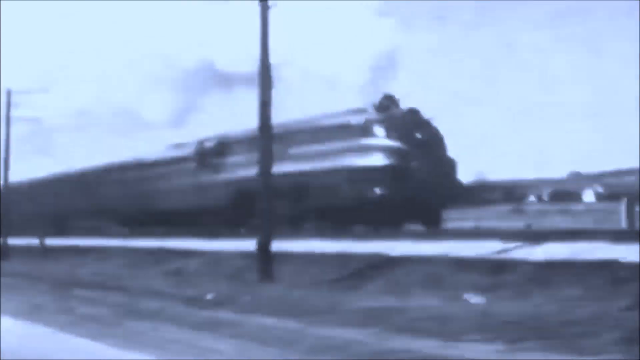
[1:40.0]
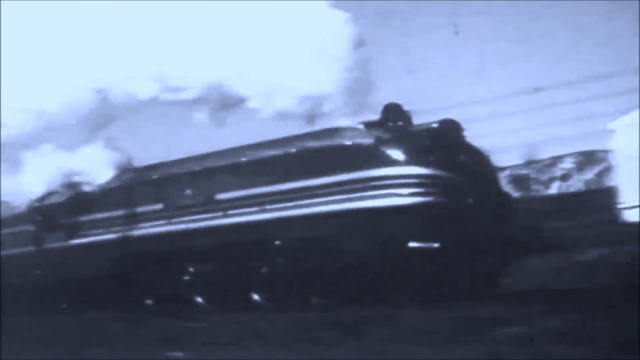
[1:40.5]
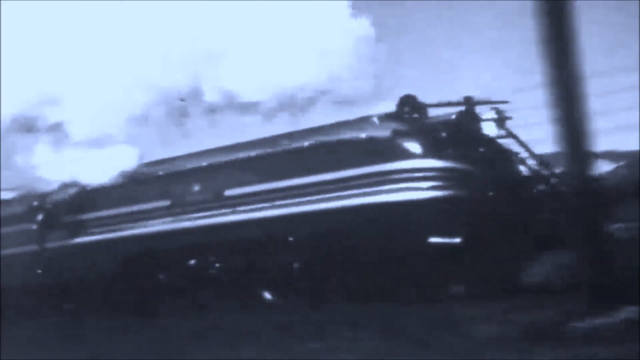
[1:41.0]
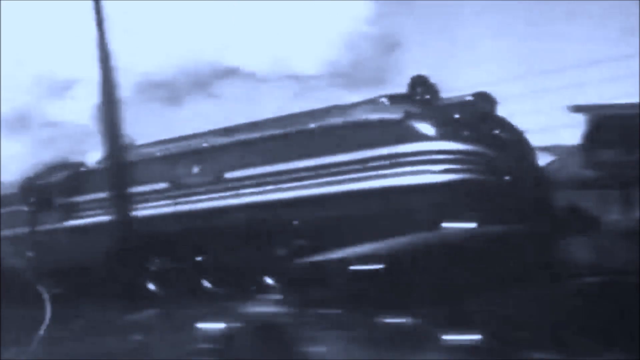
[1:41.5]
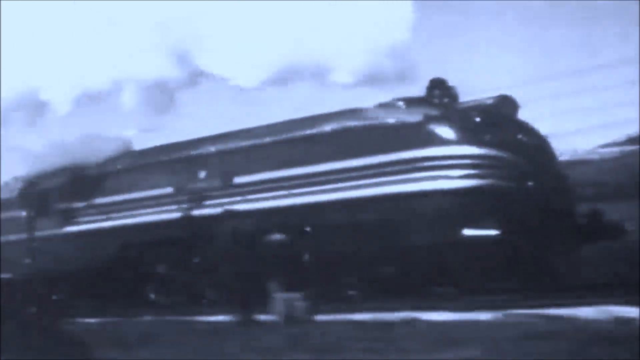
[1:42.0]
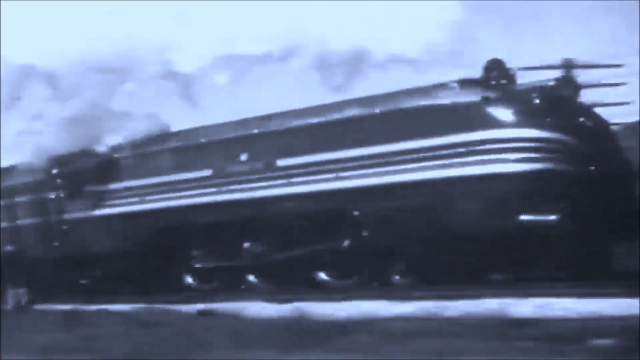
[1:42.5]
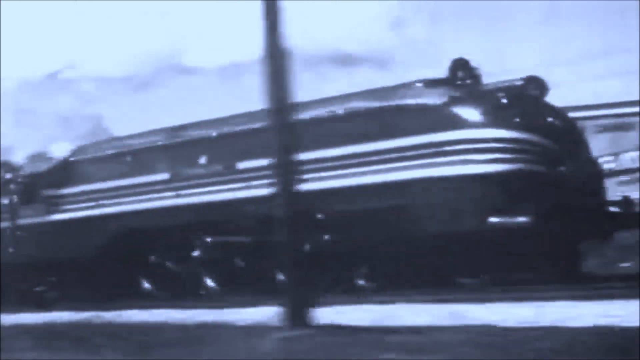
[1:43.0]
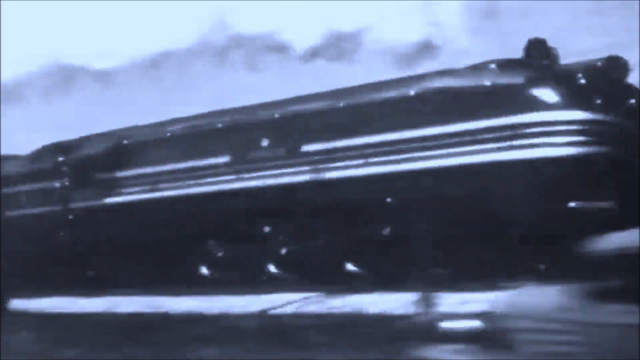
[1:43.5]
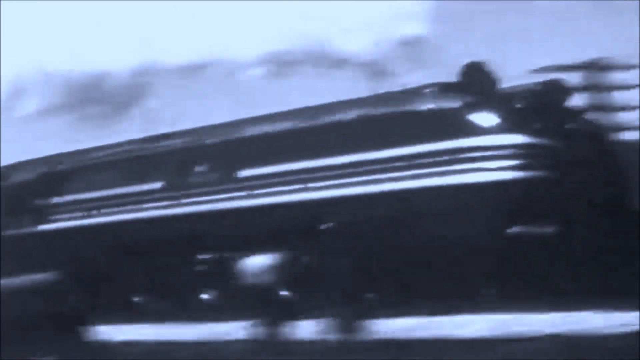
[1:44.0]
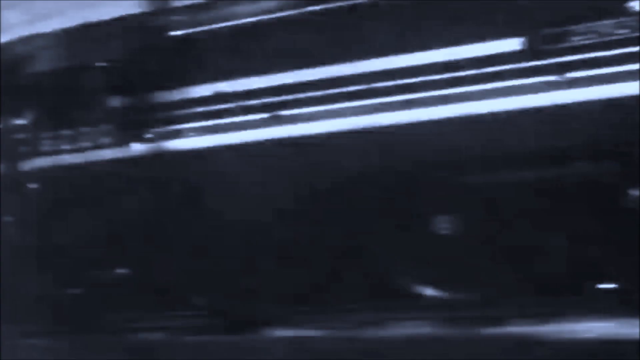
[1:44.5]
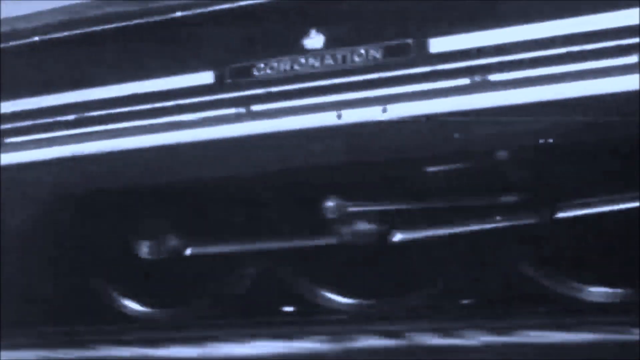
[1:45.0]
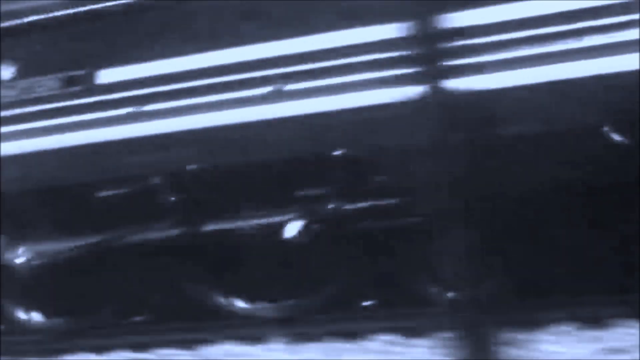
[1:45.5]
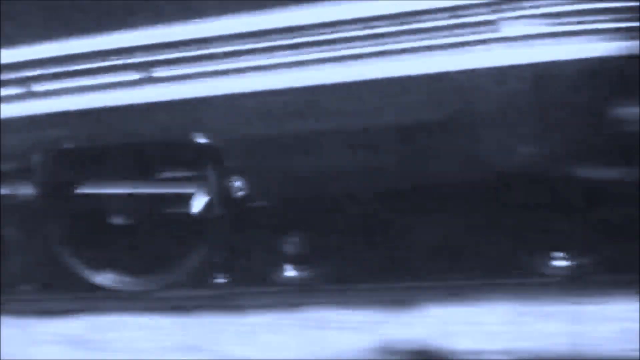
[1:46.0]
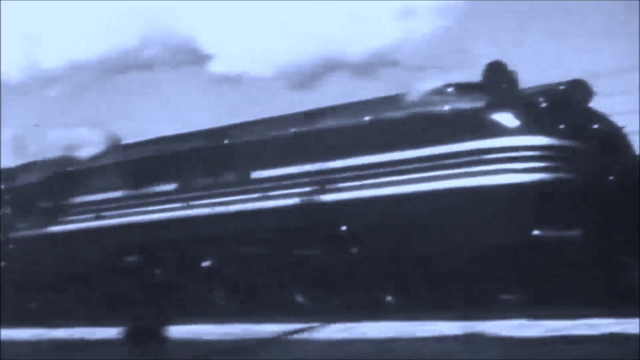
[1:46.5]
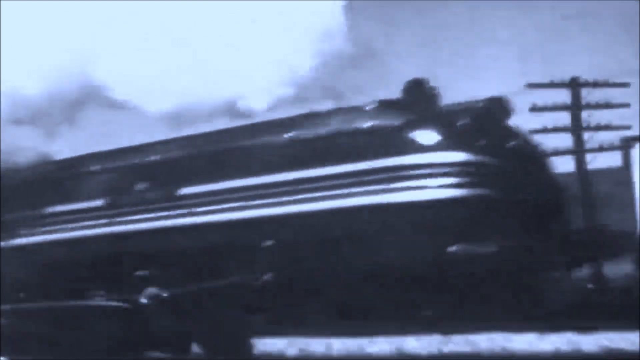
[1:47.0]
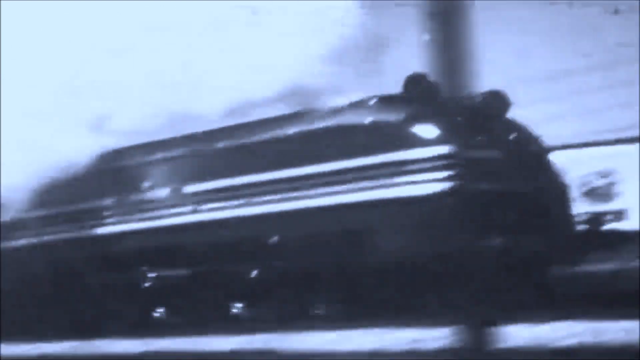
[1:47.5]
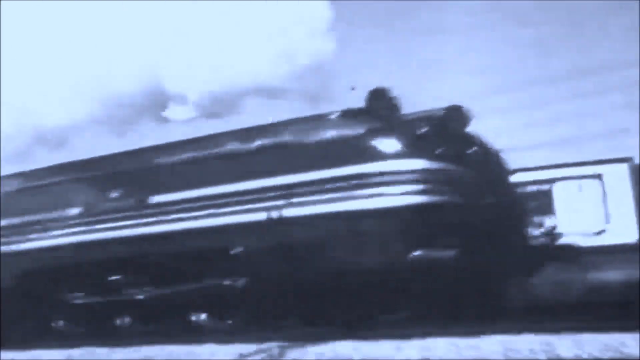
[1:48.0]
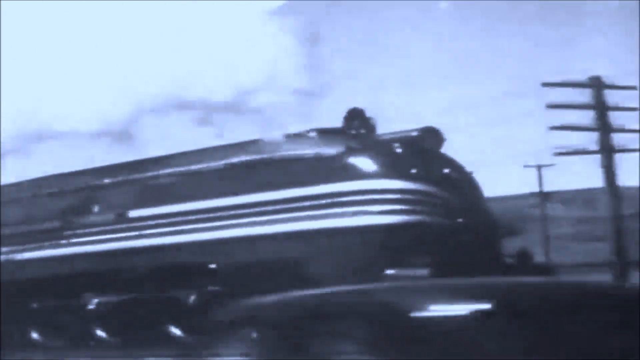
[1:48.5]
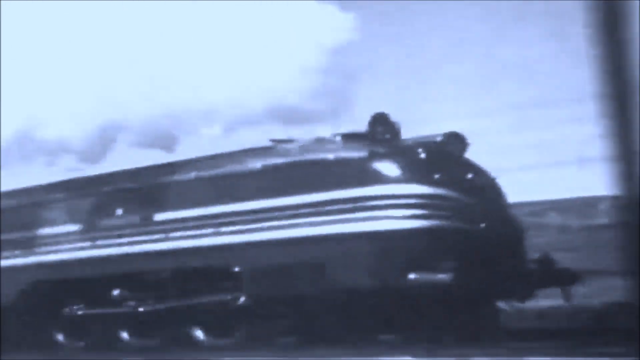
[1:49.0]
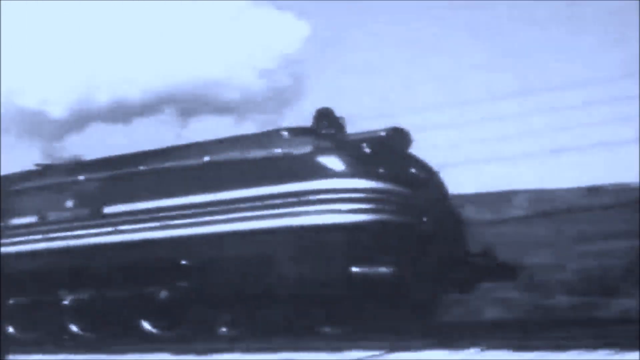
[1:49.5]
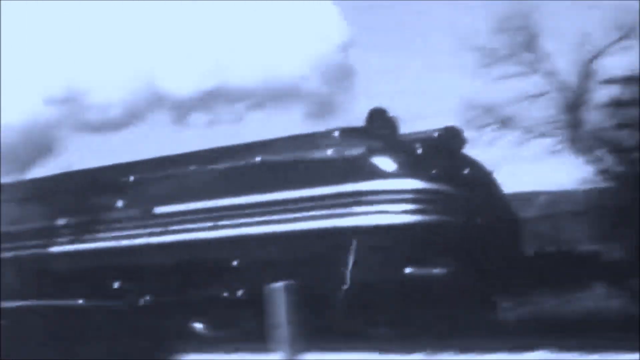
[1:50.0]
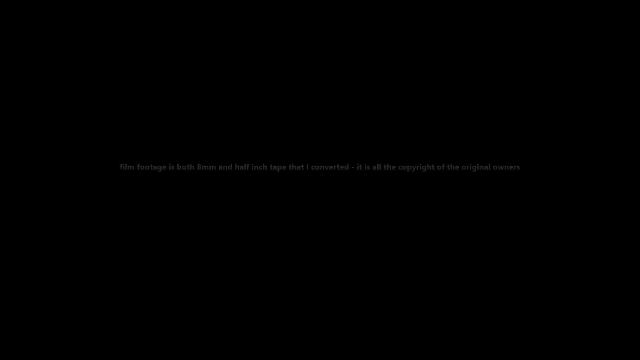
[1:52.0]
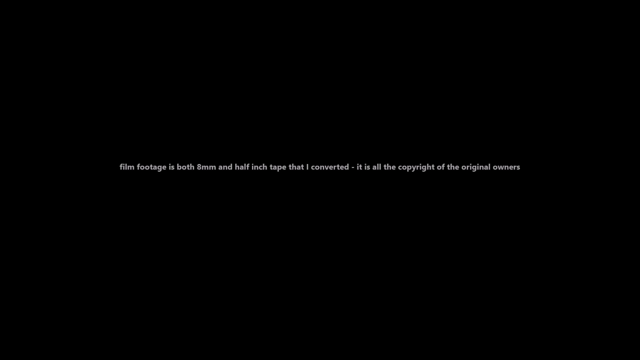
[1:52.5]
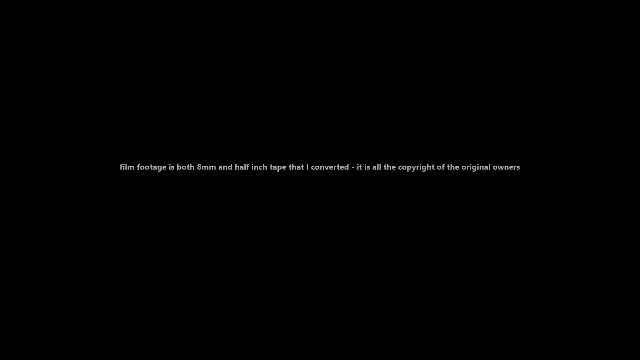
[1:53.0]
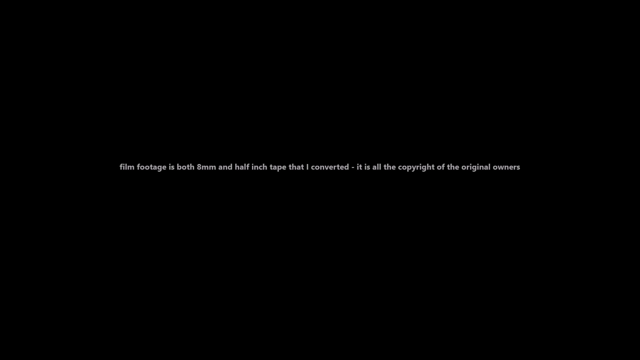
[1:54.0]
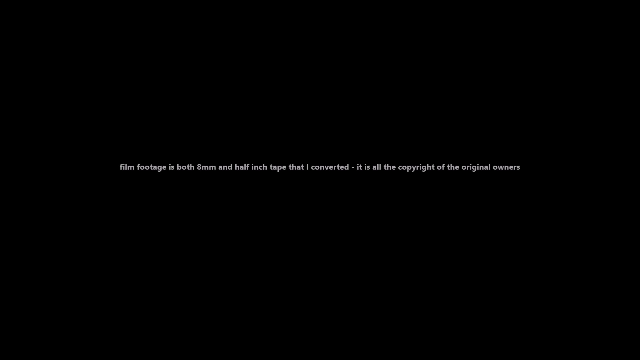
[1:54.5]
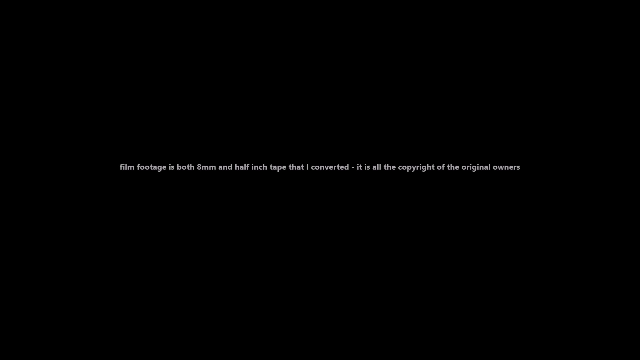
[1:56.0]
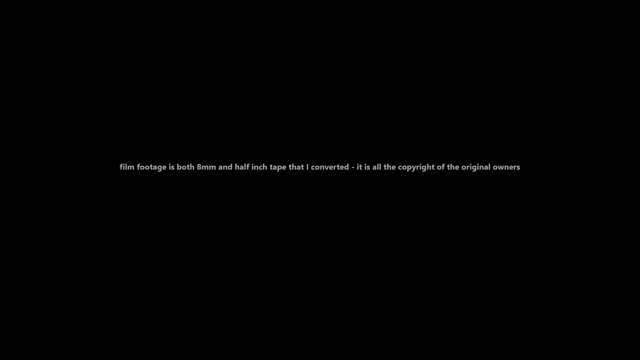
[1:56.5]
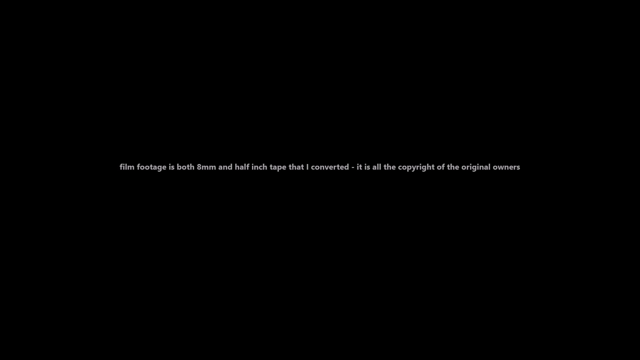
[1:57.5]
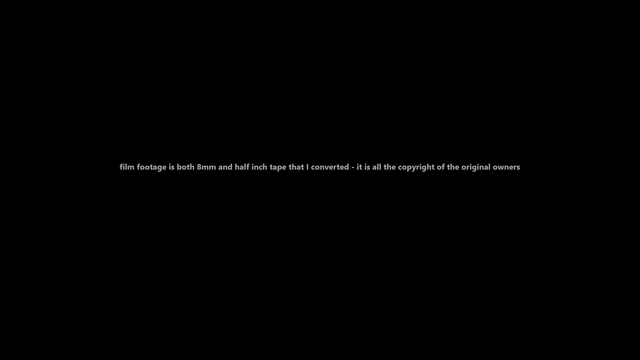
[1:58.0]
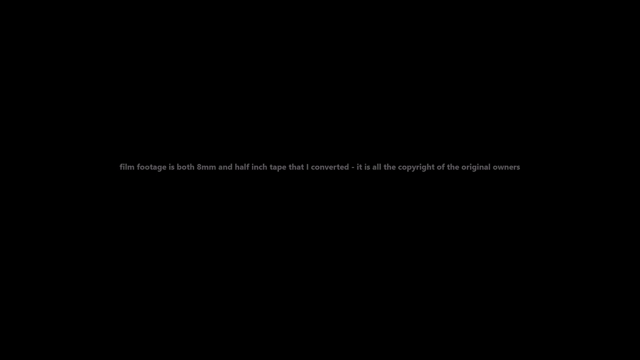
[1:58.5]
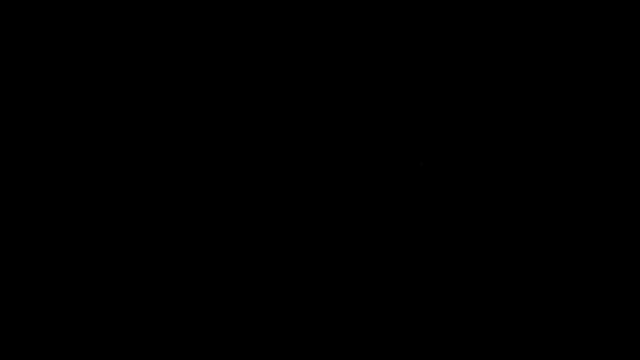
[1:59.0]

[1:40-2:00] The train moves, and the camera is zoomed in closer on it, so the cars on the road next to the train and an occasional person appear only as objects whizzing by. The train appears to pick up speed and goes quite fast. The camera zooms in on the wheels, which turn quickly along with the horizontal attachment driving them. The smoke coming out of the train is thick and dark. At the very end, very small white text appears in the center of the screen stating that the video was converted from millimeter film. The film remains blurry, though what is happening is still clear.